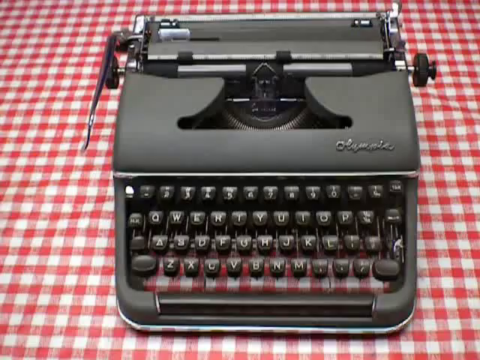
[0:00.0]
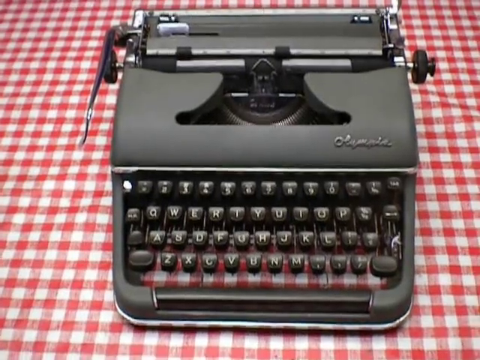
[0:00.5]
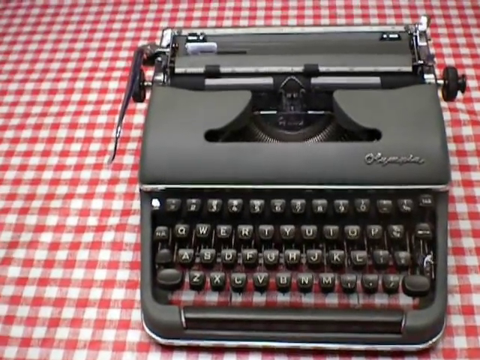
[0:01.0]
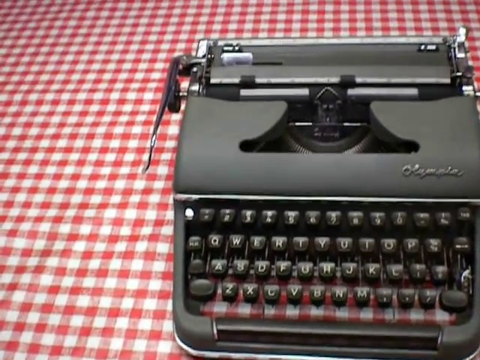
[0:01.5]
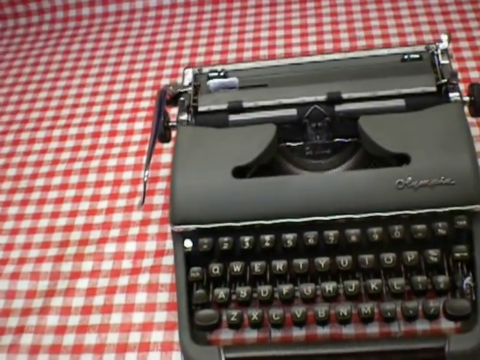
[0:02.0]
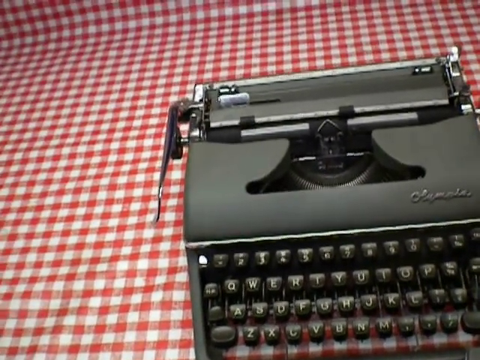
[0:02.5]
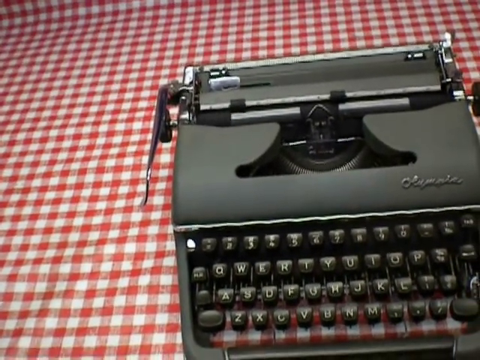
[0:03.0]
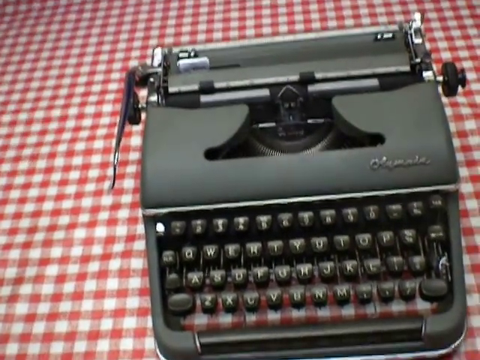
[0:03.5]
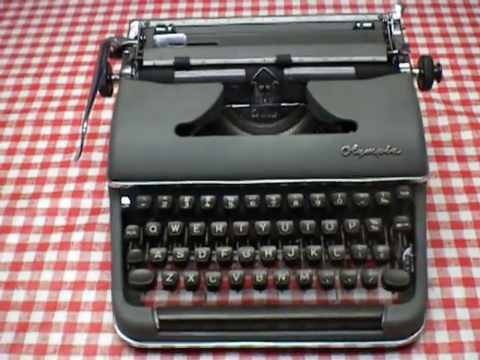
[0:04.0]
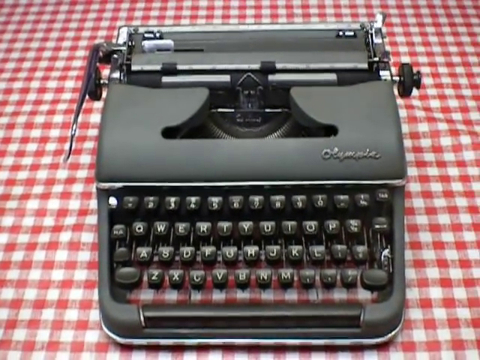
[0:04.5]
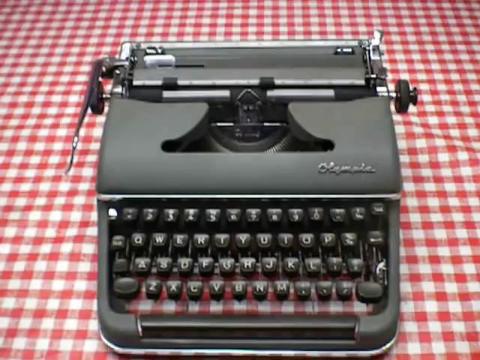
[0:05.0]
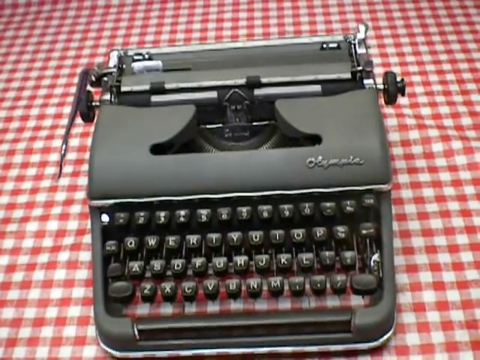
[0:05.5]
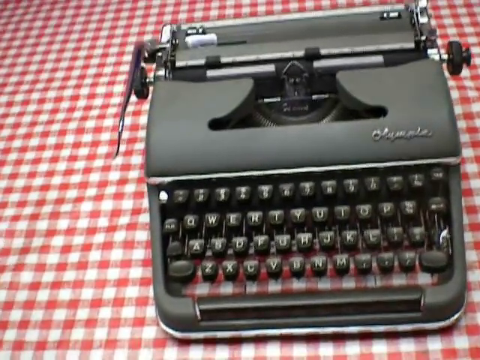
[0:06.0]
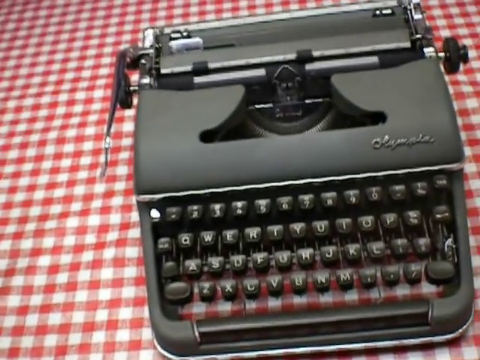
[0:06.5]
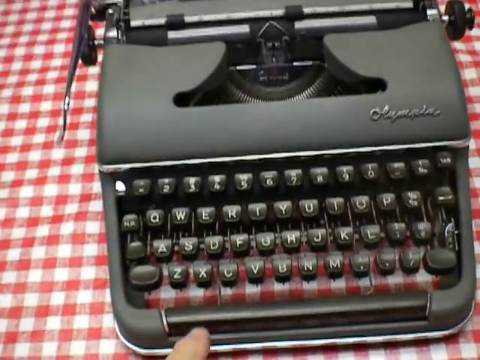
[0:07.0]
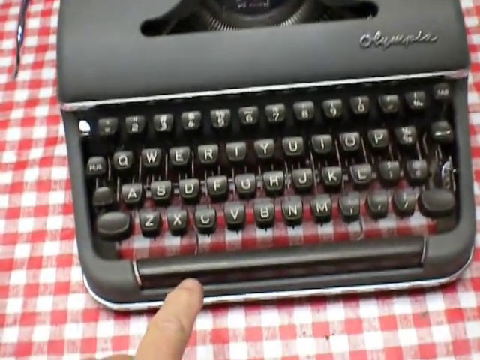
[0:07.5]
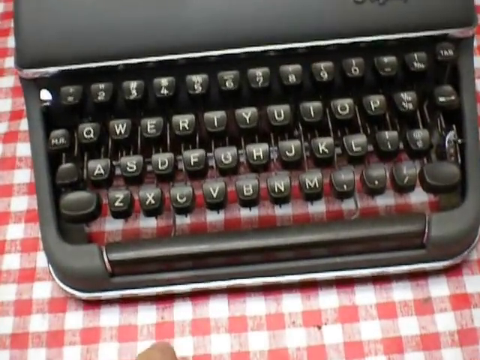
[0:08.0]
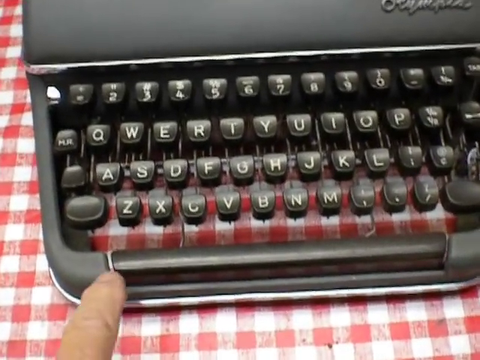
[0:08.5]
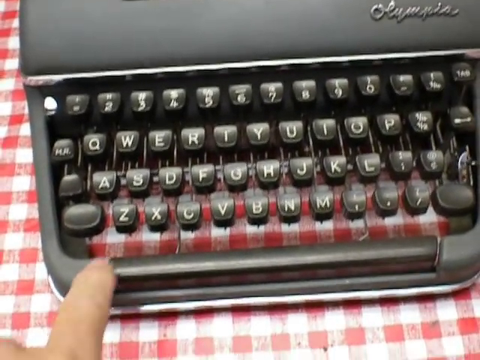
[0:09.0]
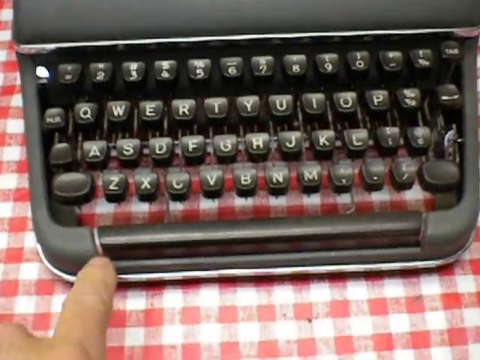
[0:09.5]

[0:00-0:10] An old Olympia typewriter sits on a table covered with a tablecloth in a small red and white checked pattern. The typewriter is slate gray and has all the expected keys, including the alphabet and number keys, and all of the buttons bear white letters or white numbers. At the top is the bail with a silver handle that is slid over for each typed line. A man's finger is visible, pointing to the typewriter buttons: first toward the space bar, then toward the area where the Z is located. On the right side of the typewriter, above the row of numbers, the brand name "Olympia" is written in cursive.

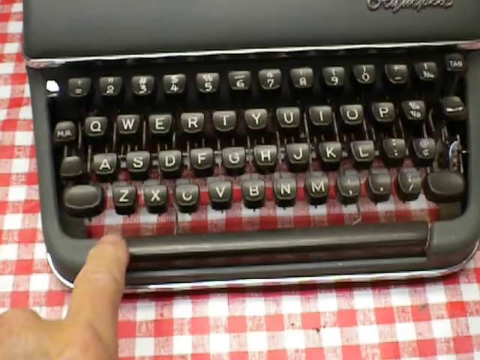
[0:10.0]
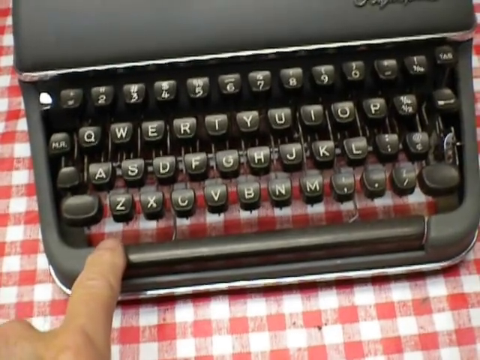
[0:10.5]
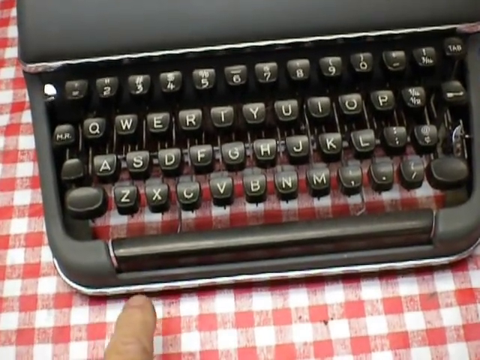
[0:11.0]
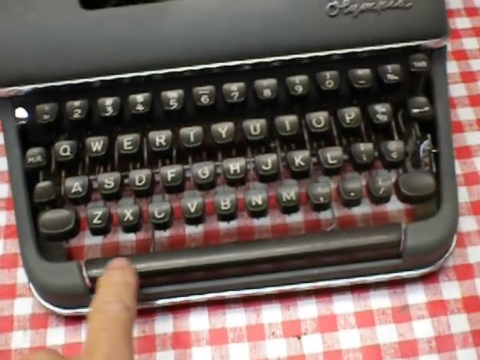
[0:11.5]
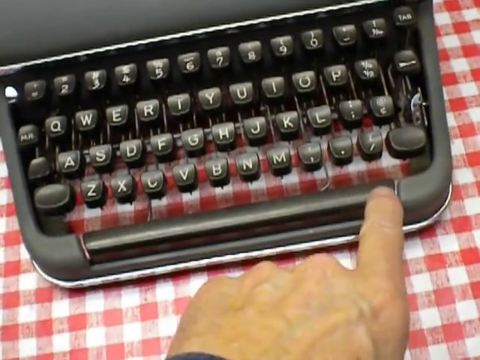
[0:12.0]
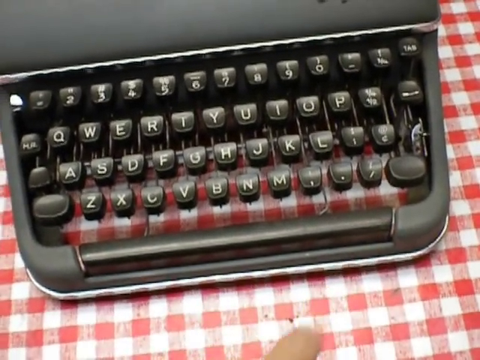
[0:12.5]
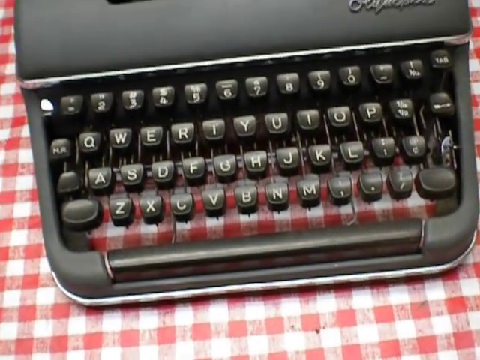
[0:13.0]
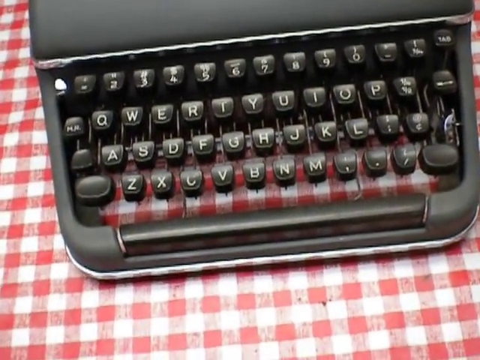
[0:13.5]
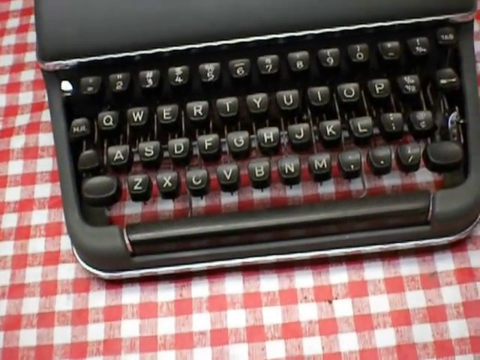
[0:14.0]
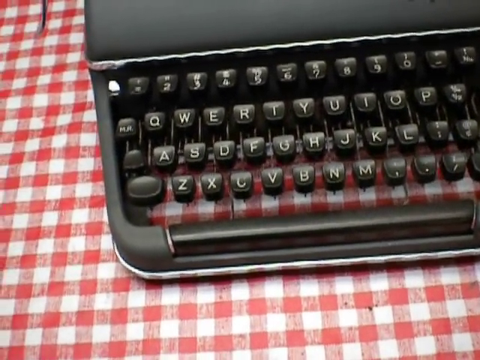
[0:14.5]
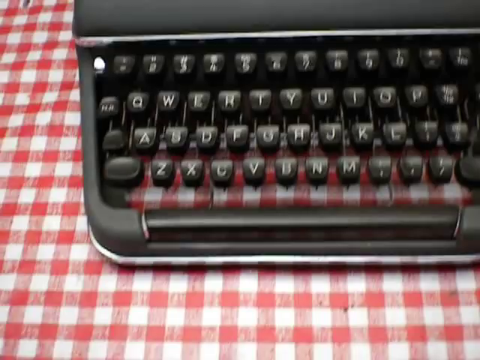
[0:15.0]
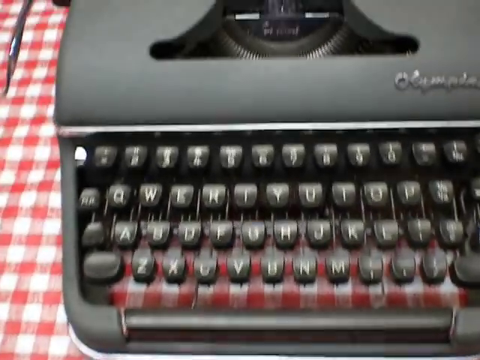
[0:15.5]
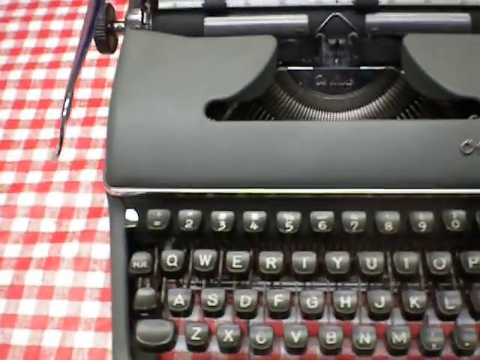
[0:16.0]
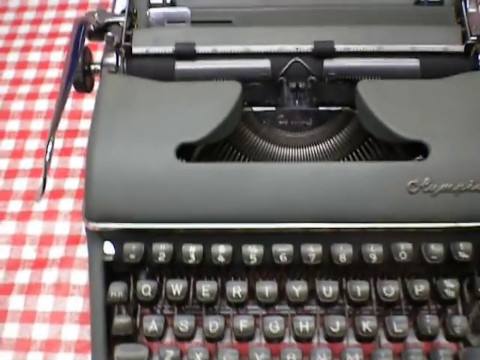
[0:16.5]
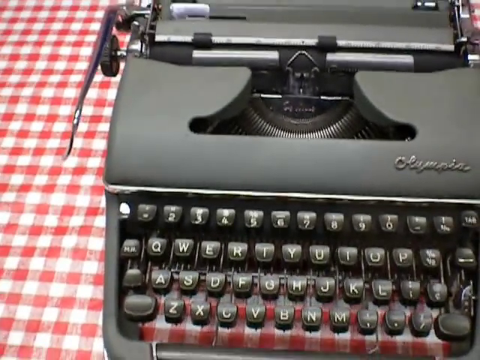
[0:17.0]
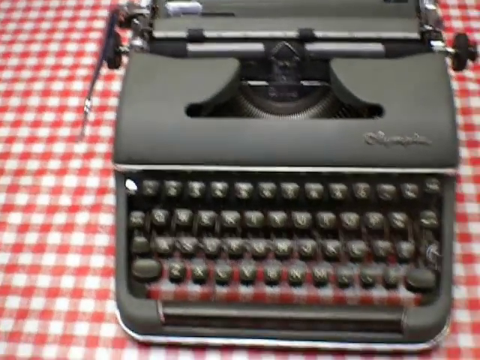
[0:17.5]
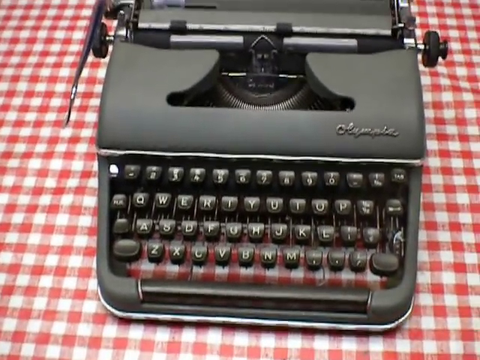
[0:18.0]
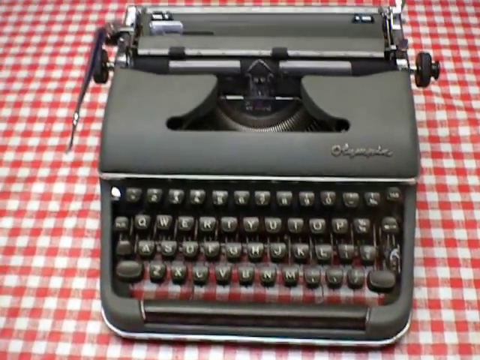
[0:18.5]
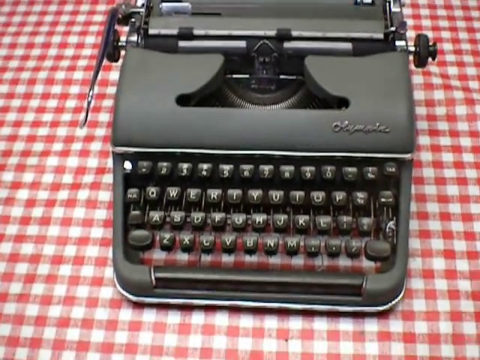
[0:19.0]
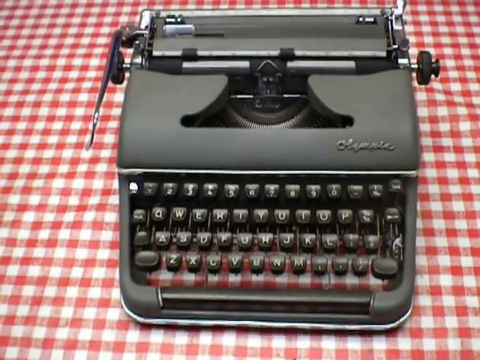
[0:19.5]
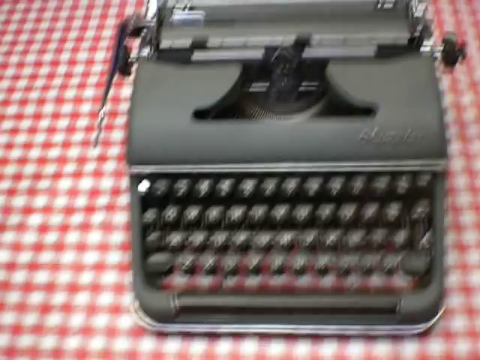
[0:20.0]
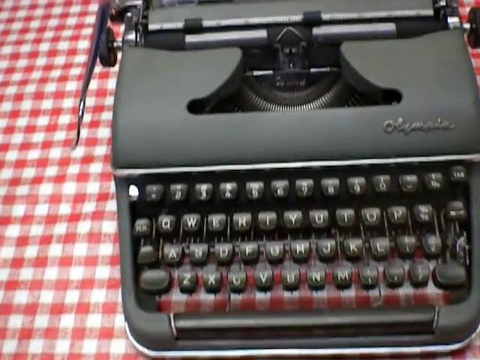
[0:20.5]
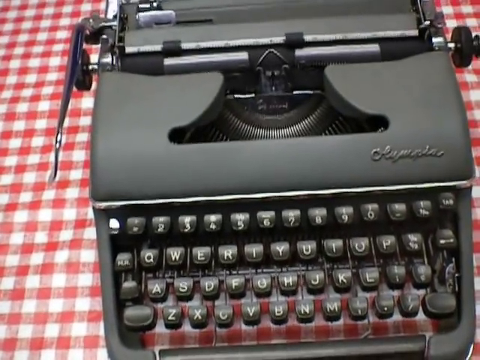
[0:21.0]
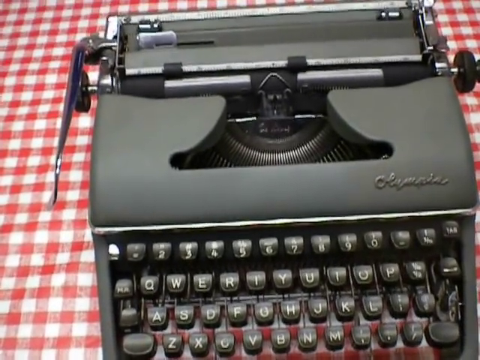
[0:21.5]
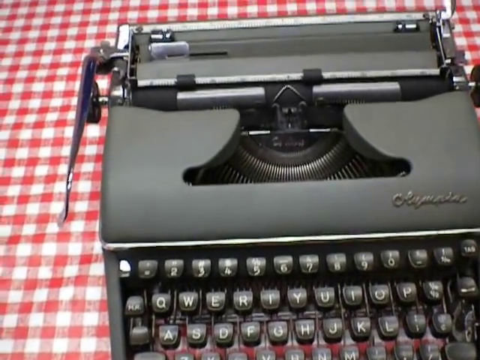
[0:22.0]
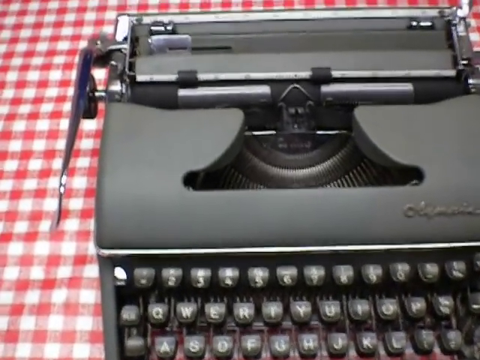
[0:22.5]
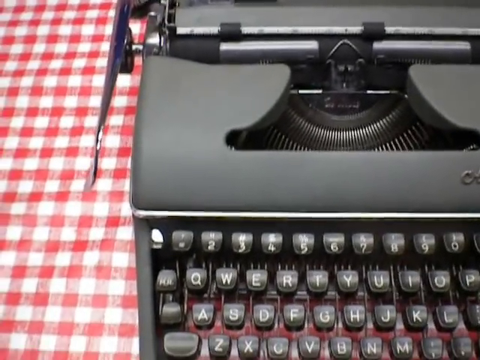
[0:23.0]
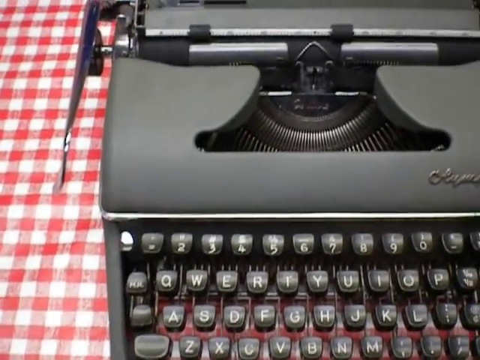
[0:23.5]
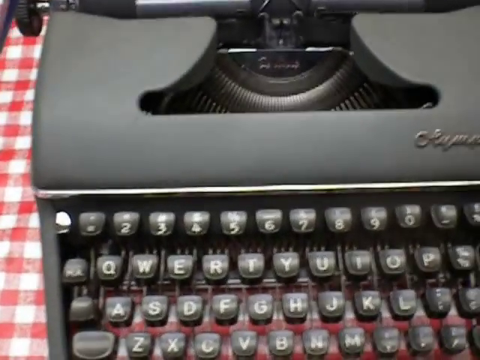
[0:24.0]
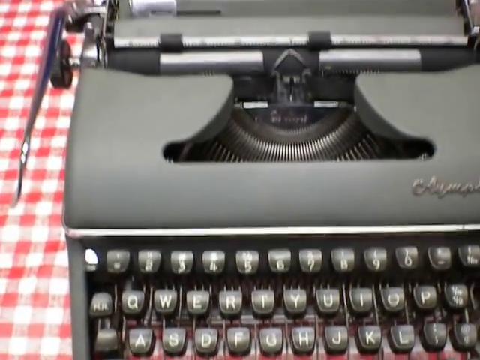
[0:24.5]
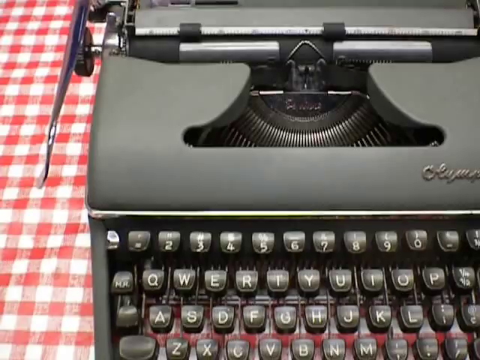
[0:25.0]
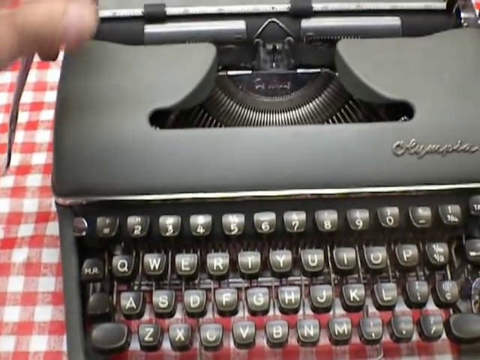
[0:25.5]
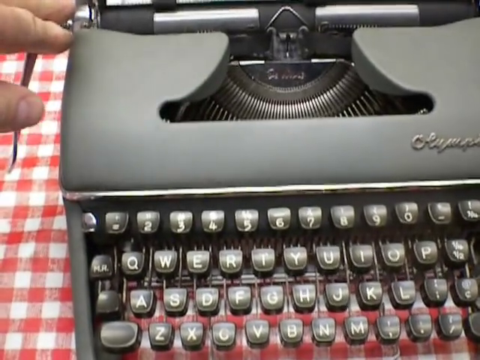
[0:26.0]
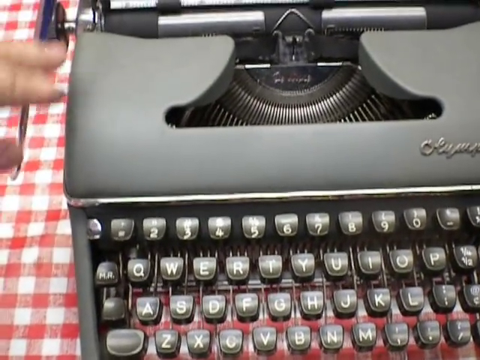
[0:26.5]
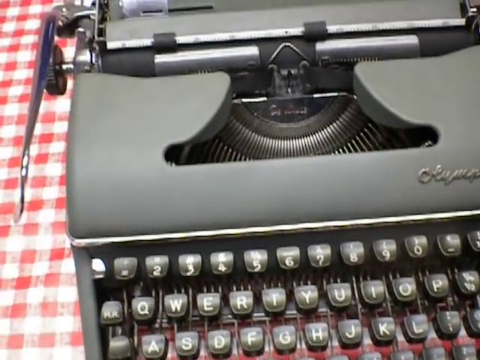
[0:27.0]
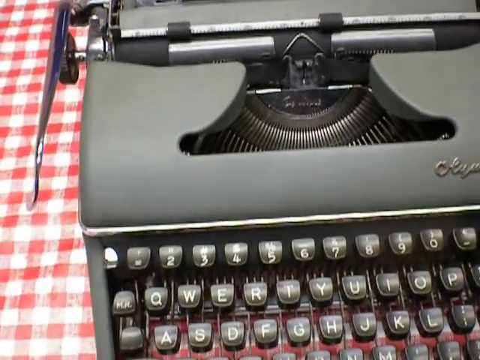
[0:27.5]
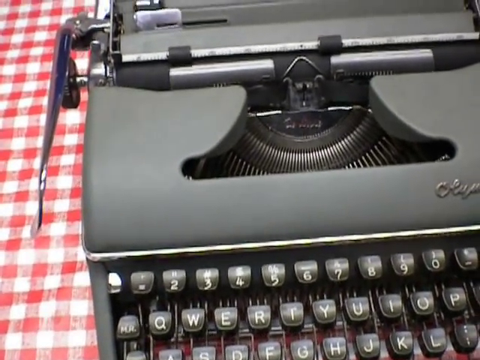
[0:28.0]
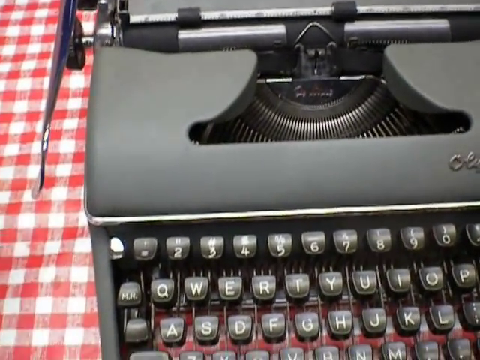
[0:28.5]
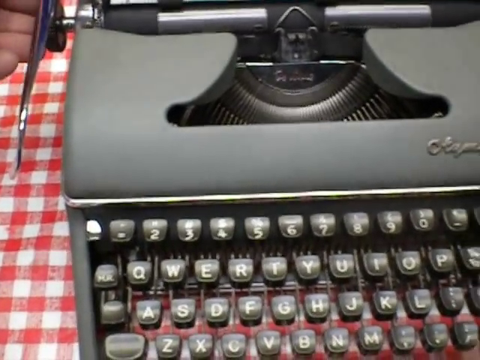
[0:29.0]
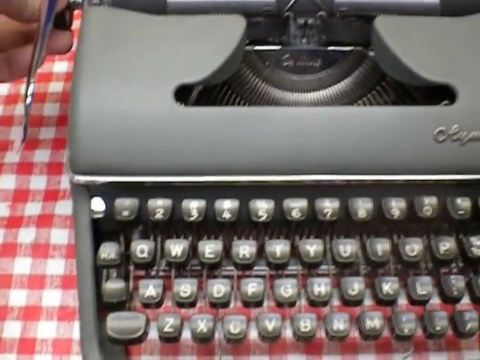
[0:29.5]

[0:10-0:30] A man's index finger touches the space bar of an old typewriter and slides from the left side to the right side of it. The hand then touches the silver bail at the top left-hand side of the typewriter, with the fingers on the bail, and touches the knob on it. The hand moves back down to the space bar, and the finger again slides from left to right across it. The finger then leaves the frame, leaving only the old vintage typewriter on the table. The typewriter is slate gray, with the brand name Olympia on the right just above the row of number buttons, and all the letters and numbers on the buttons are white. It sits on a tablecloth with a small red and white checked design.